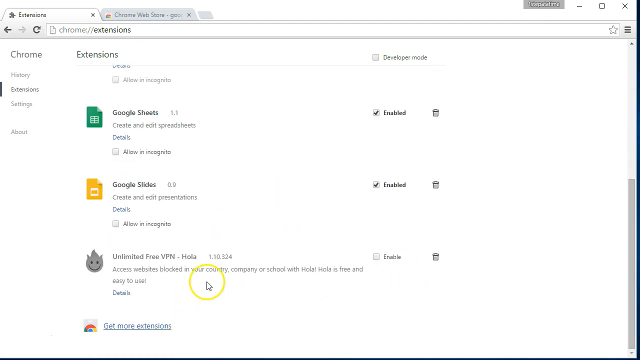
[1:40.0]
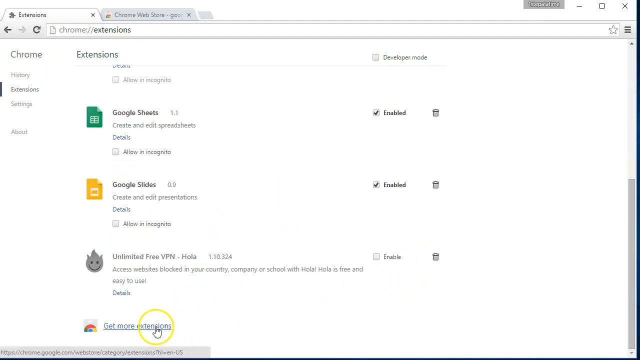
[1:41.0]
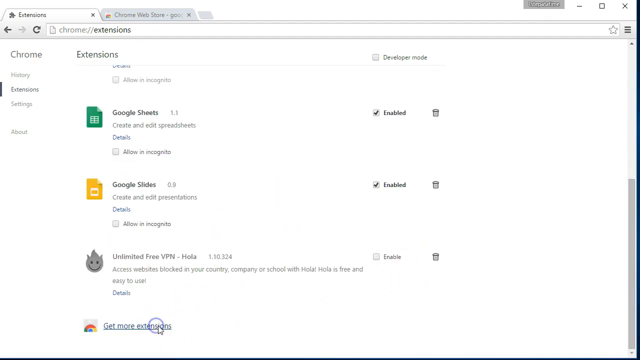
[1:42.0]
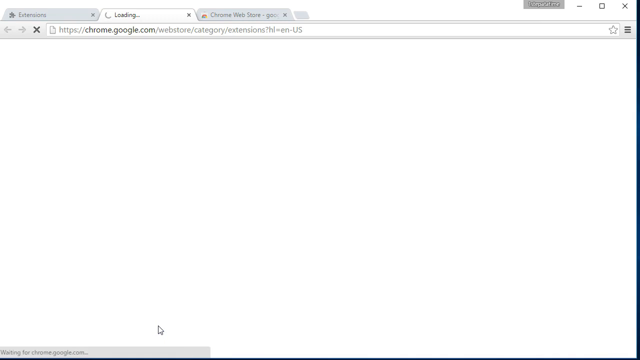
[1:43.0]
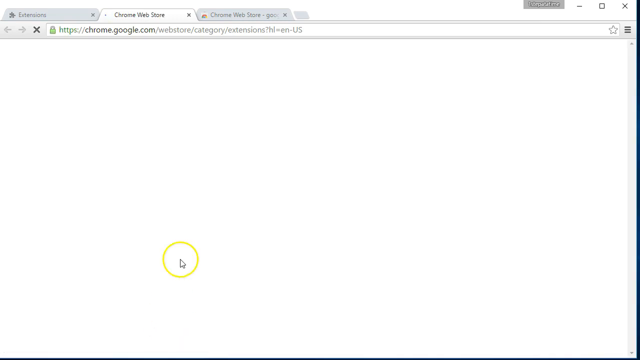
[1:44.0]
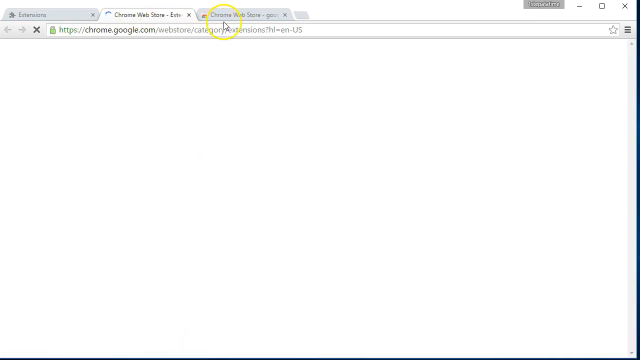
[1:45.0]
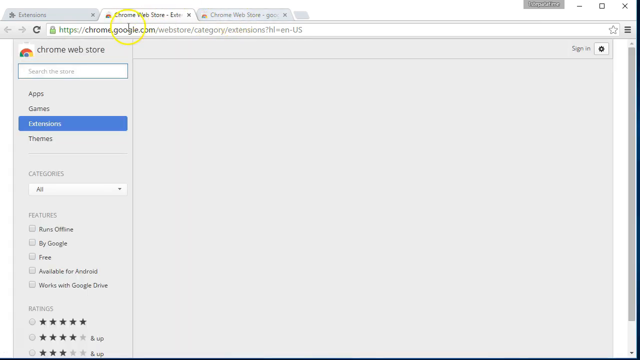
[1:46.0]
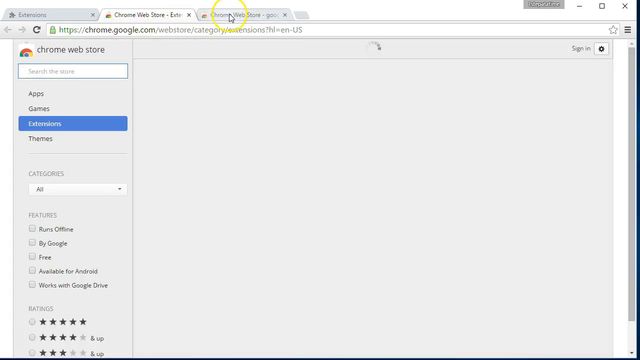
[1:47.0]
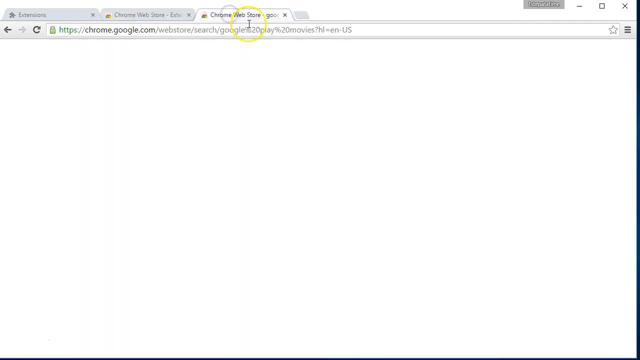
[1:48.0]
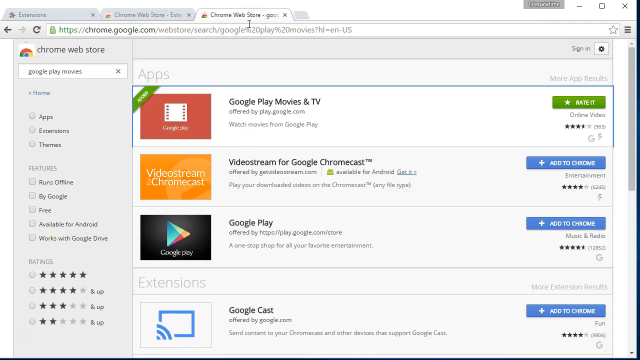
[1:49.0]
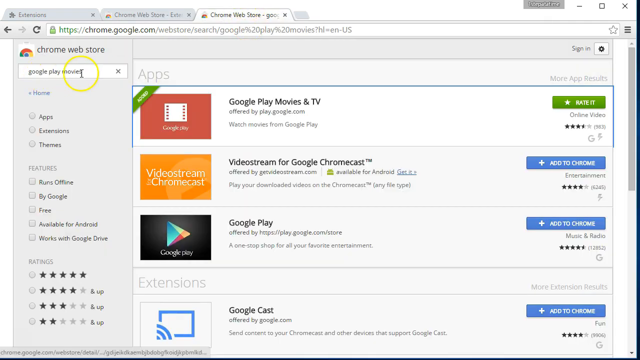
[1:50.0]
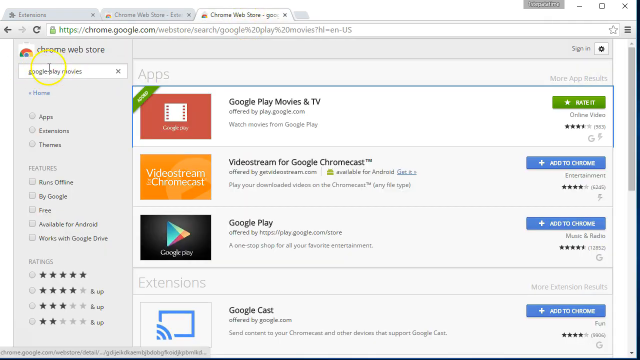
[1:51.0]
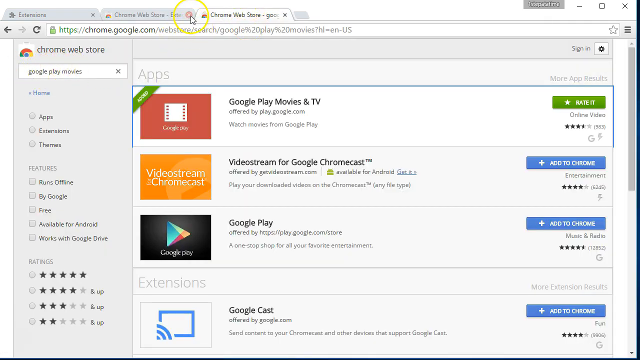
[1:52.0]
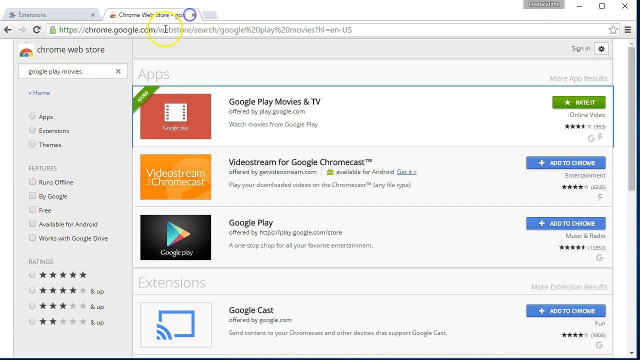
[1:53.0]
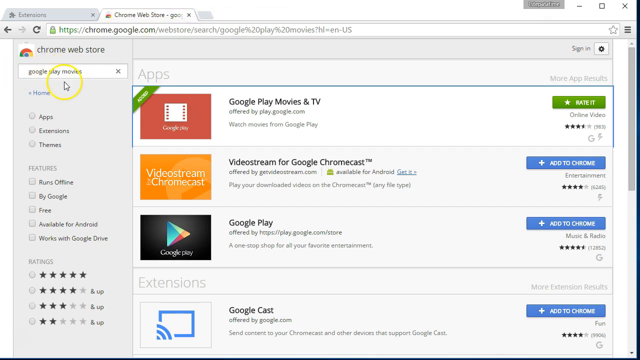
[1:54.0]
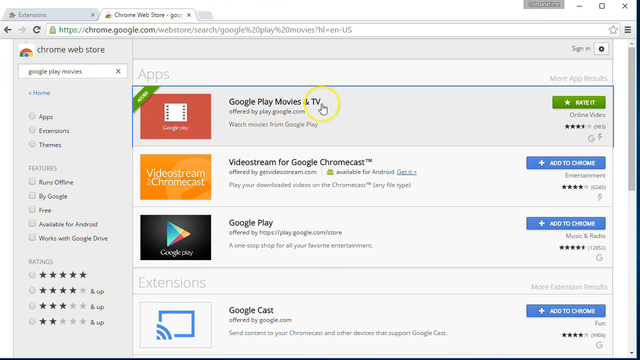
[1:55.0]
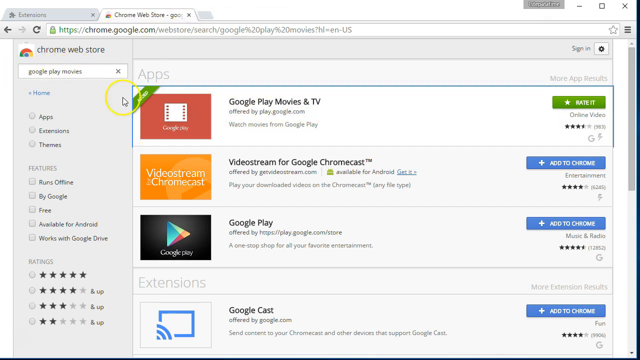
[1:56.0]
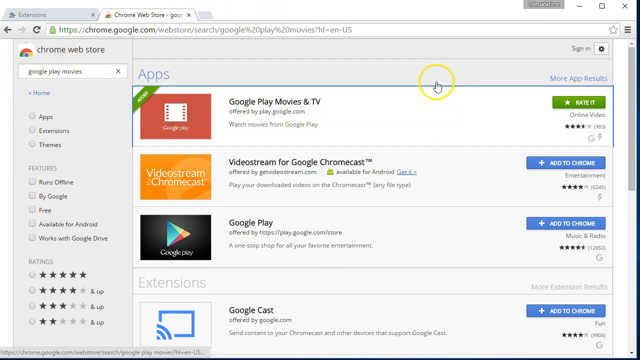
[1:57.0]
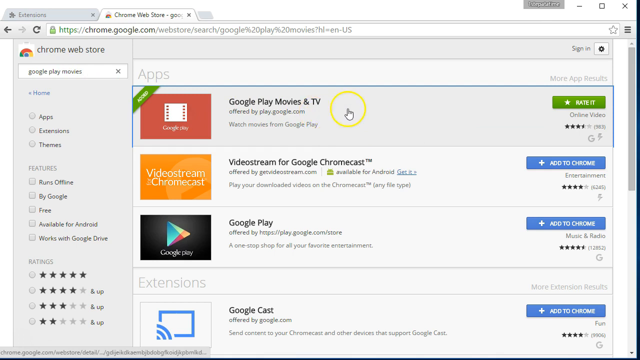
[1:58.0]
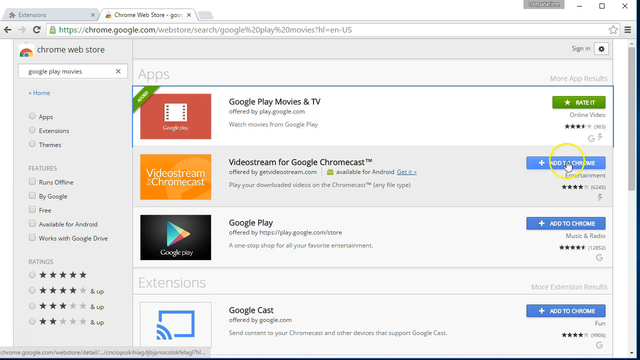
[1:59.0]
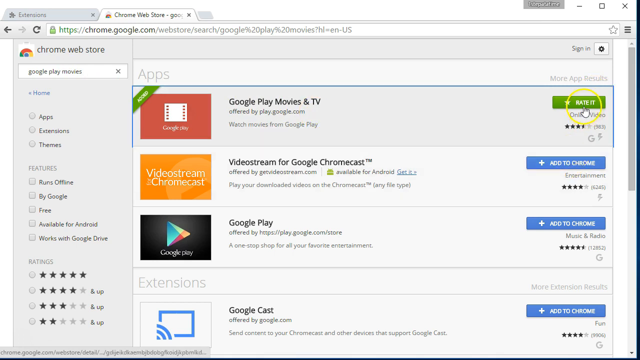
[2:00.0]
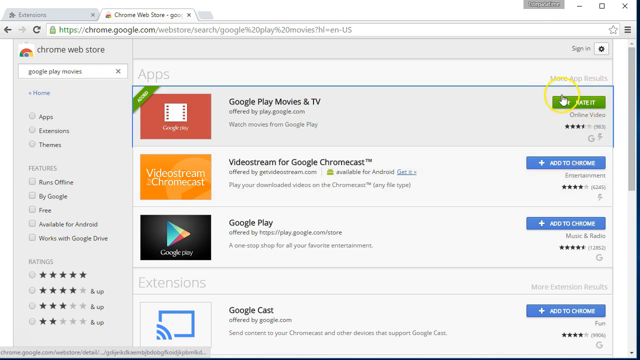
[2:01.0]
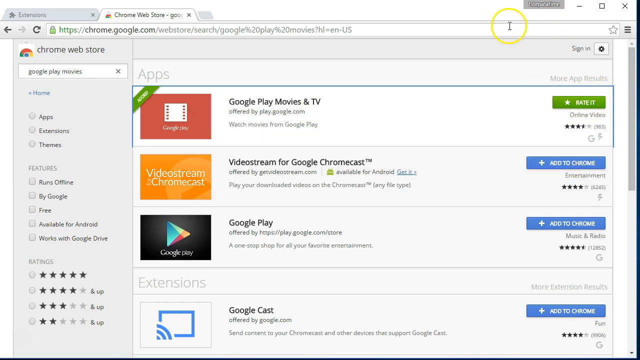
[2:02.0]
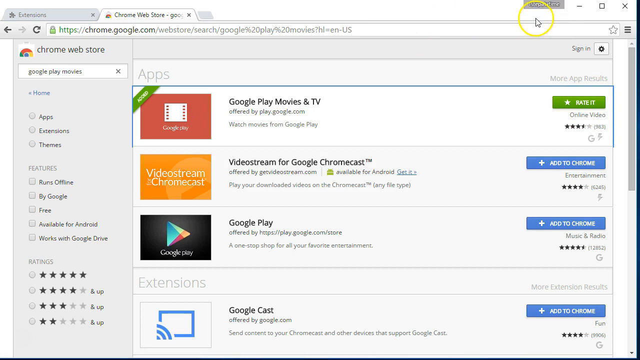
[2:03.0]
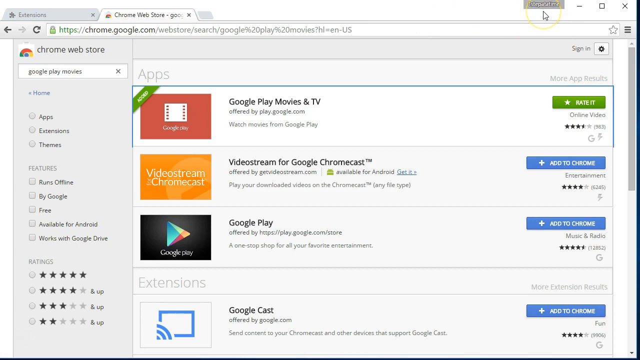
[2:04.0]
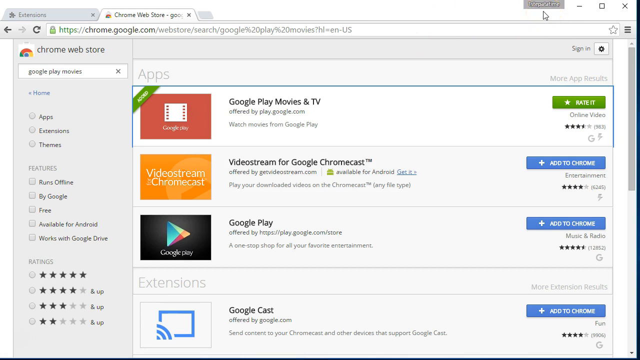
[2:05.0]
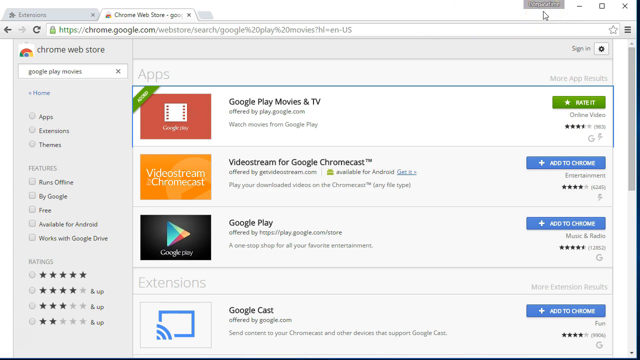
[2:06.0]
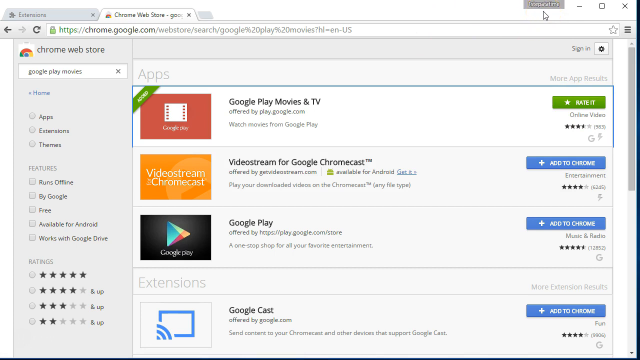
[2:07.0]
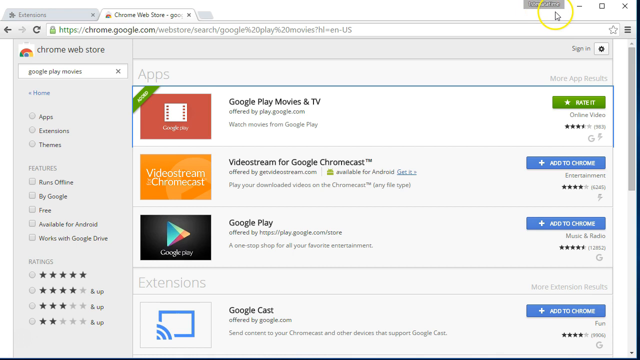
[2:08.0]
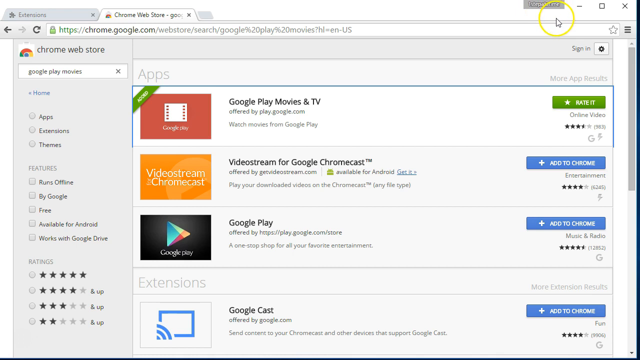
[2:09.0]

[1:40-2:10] The Chrome extensions tab shows a list of four extensions: Avira Browser Safety, Google Docs, Google Docs Offline, and Google Play Movies. The cursor is a white arrow, and a large yellow circle appears around it when it moves. The cursor hovers over a link at the bottom reading "to get more extensions" and clicks it, and a new tab labeled "Chrome Web Store" appears in the background. The cursor moves up to hover over the tab's name. The page begins to load, showing a horizontal menu on the left-hand side titled "Chrome Web Store", with filter options down the menu bar. The extensions option is highlighted in blue, and there are options for different platforms and, at the bottom, an option to select 5-star ratings or 4 stars and up. The cursor hovers briefly over the search bar, moves up to close a window, then backs out to show a list of available apps. It hovers over Google Play Movies and TV, first over the link and then over a green button on the right-hand side that gives an option to rate it.